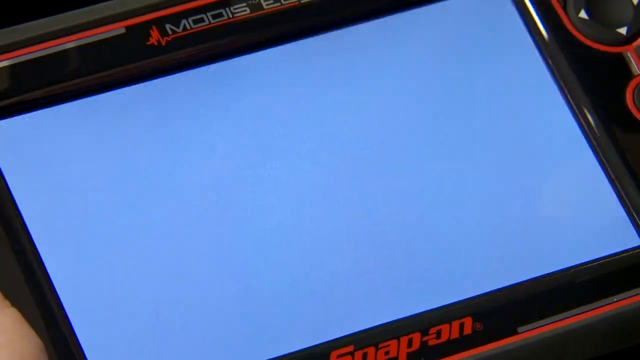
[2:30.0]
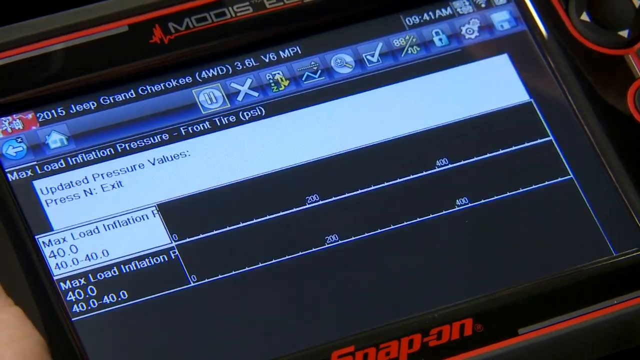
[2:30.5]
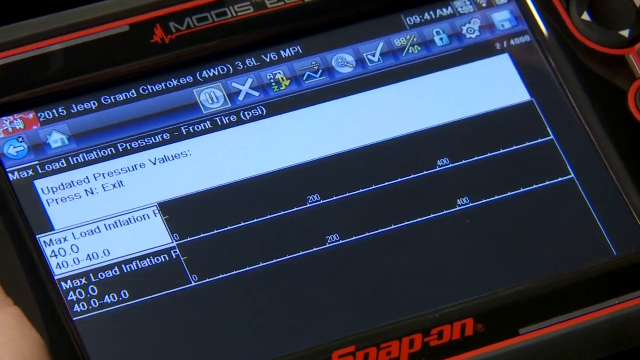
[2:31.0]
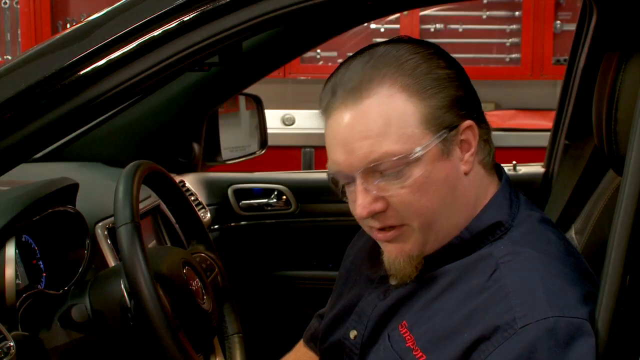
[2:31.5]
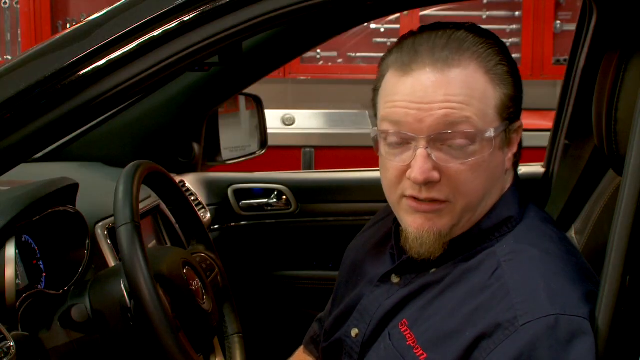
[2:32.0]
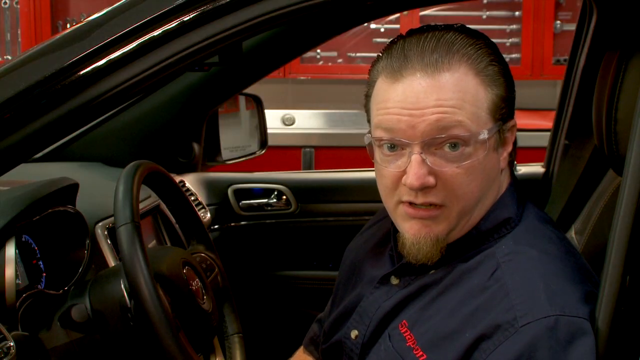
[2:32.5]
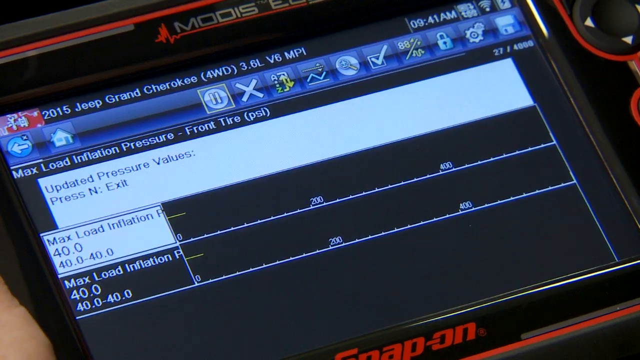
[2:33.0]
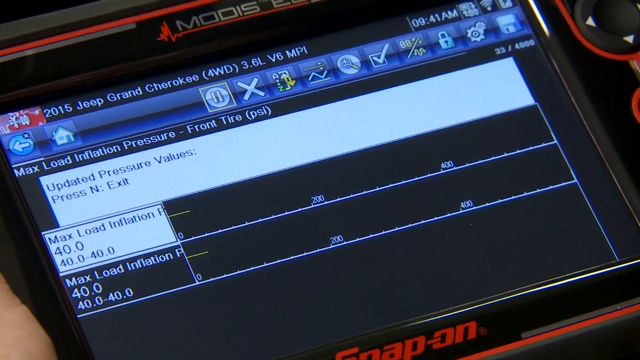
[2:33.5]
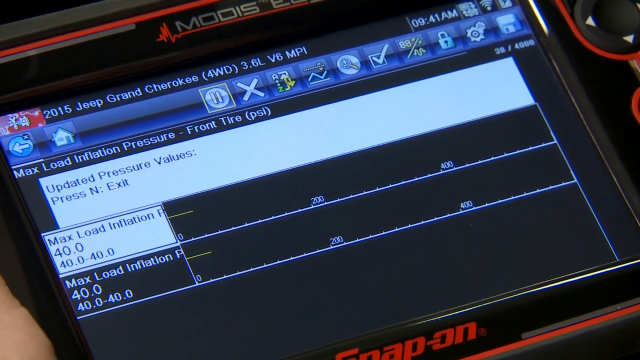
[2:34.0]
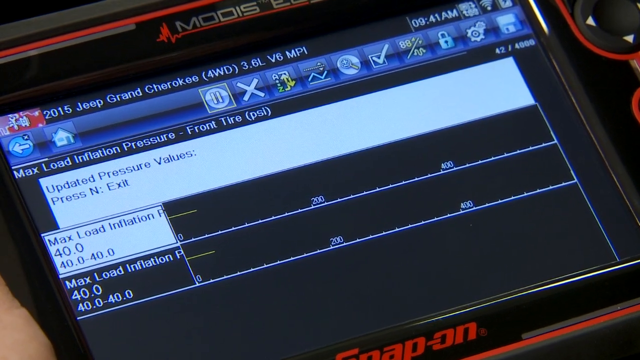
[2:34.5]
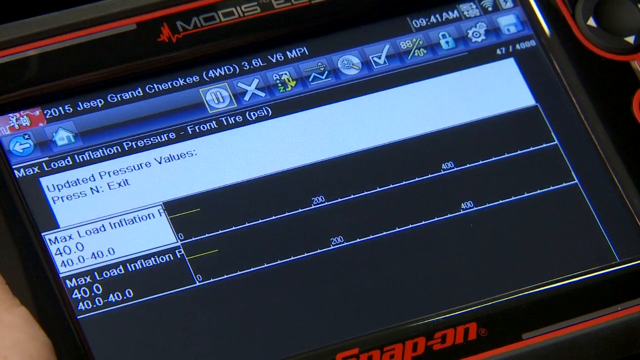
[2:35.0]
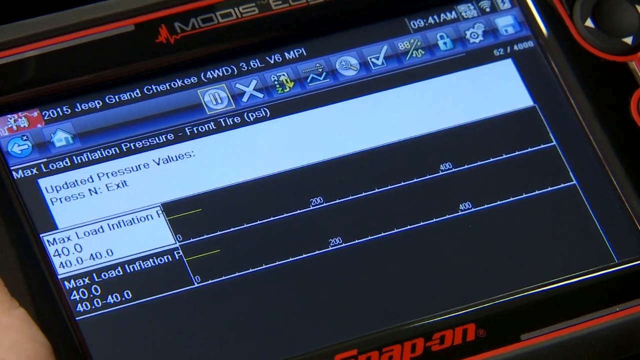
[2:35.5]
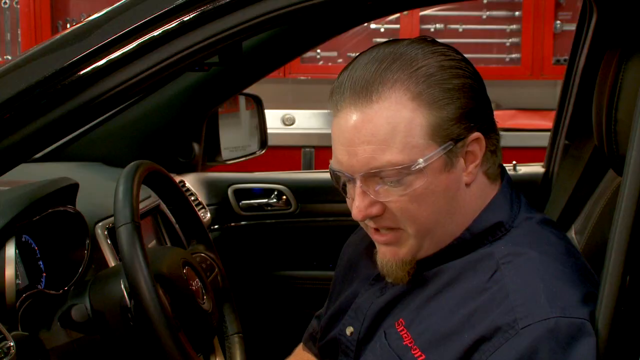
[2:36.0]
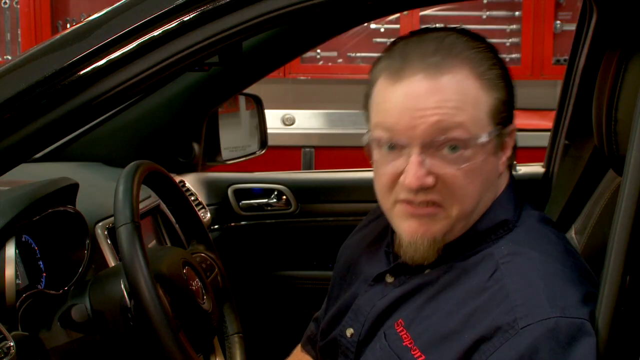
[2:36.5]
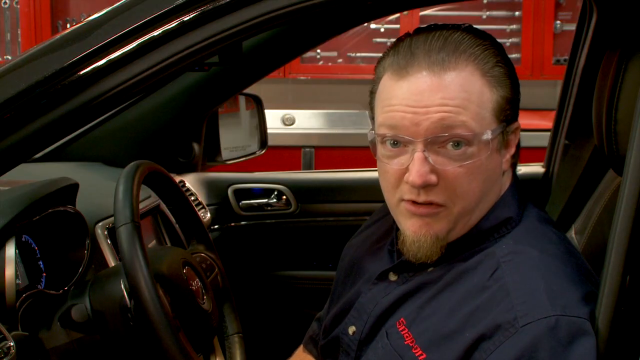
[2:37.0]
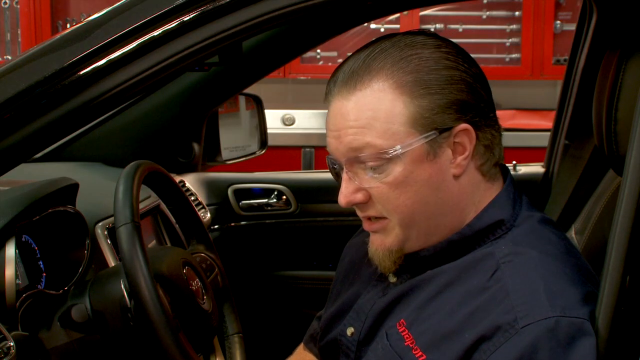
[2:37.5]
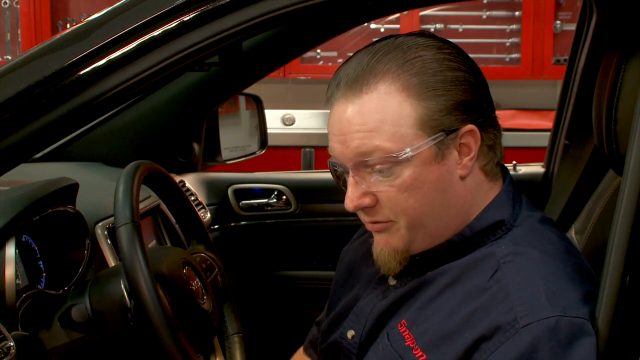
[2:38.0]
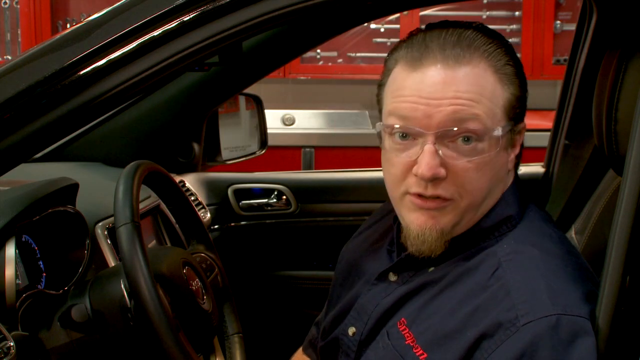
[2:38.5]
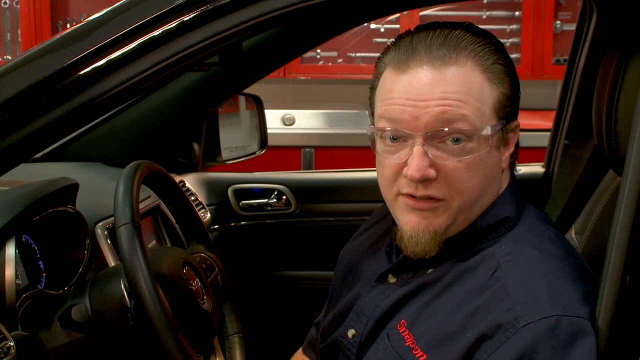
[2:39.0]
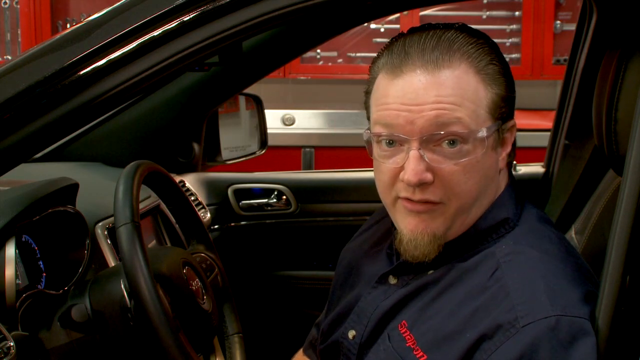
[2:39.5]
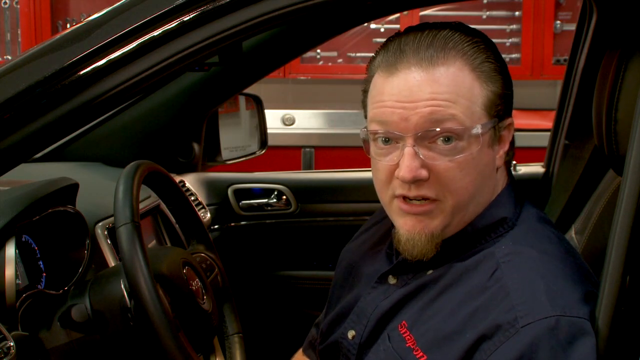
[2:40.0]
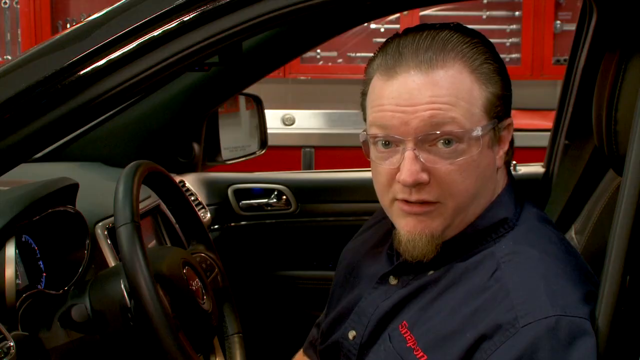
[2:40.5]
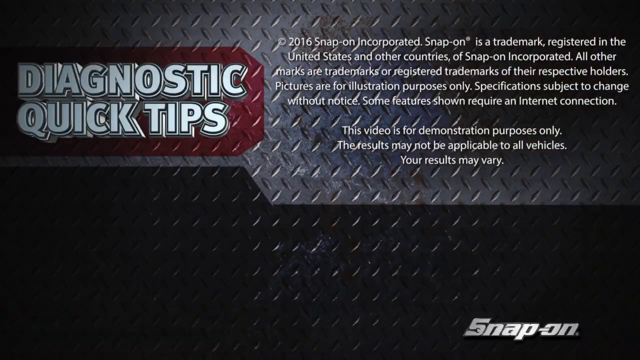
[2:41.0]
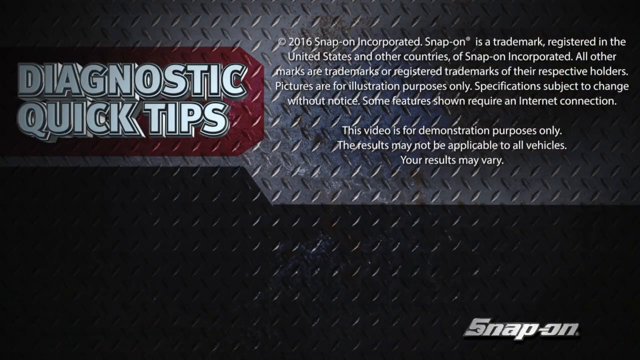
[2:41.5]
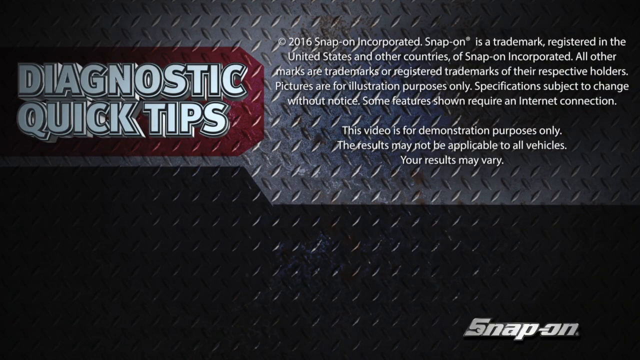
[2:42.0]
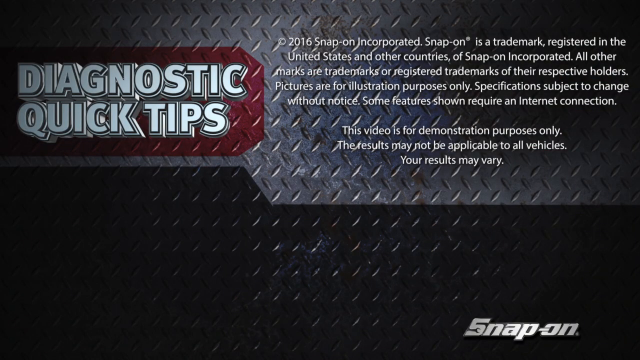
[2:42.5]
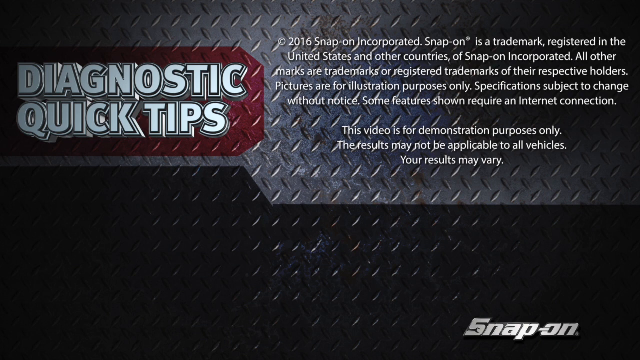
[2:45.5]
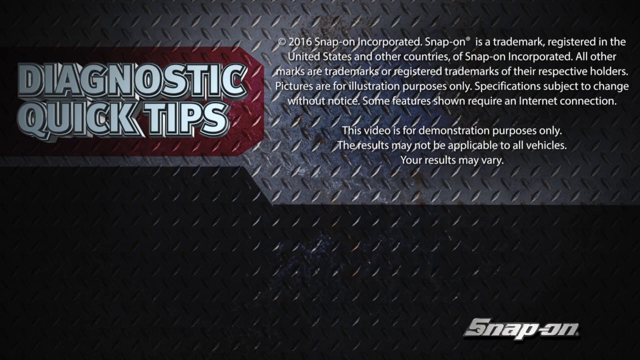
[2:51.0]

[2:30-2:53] The max load inflation pressure for the front tire has updated to 40 PSI; both max load inflation readings now show 40.0. The man nods toward the camera. An end screen with the same rustic metal background reads "diagnostic quick tips" and states that the video is for demonstration purposes only and that viewers' results may vary. It also shows a copyright of 2016.